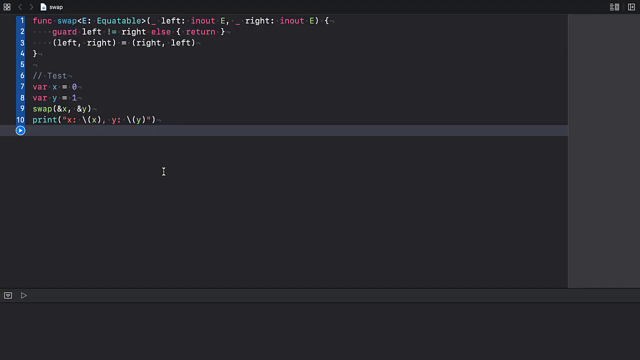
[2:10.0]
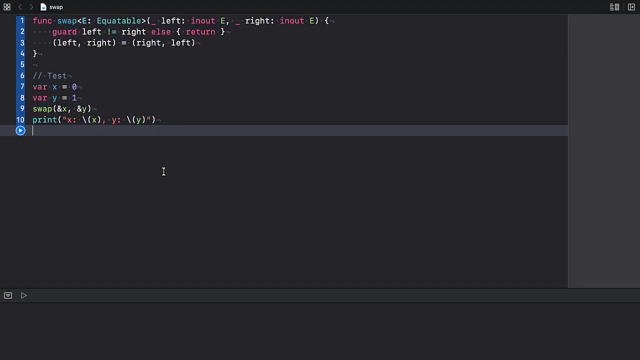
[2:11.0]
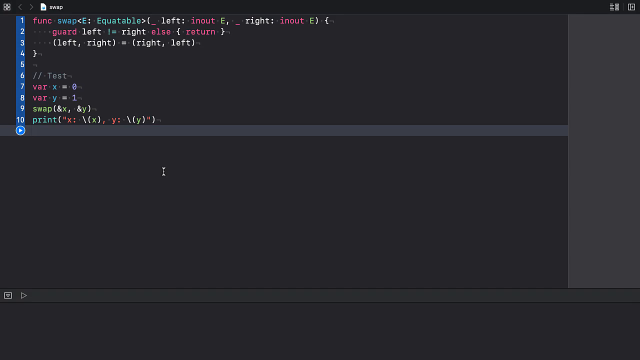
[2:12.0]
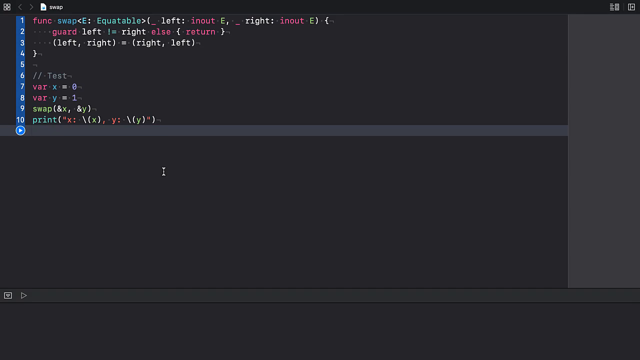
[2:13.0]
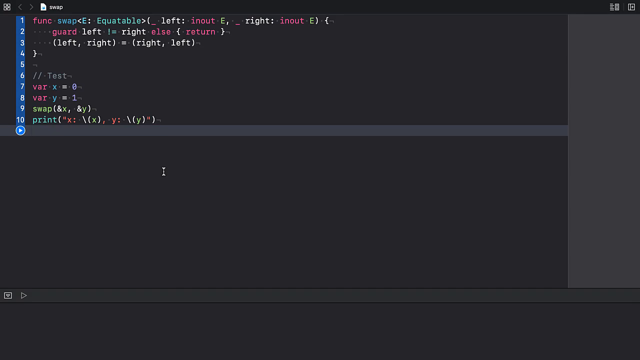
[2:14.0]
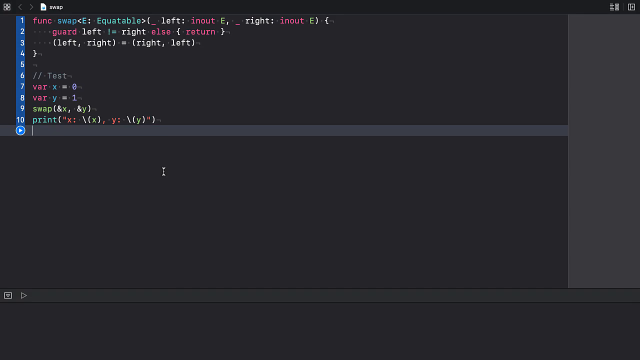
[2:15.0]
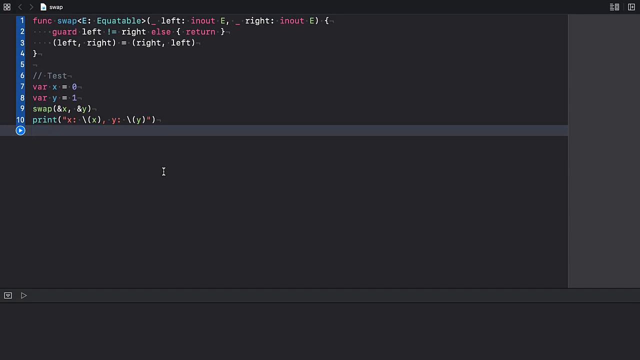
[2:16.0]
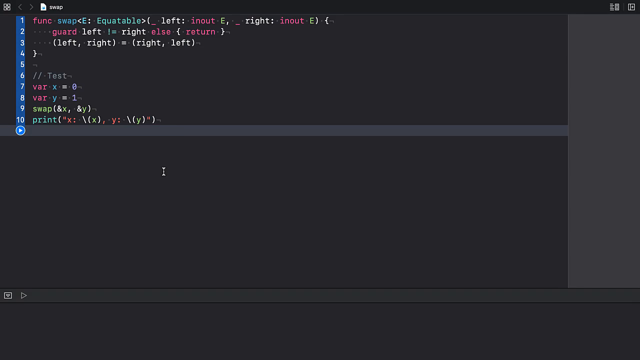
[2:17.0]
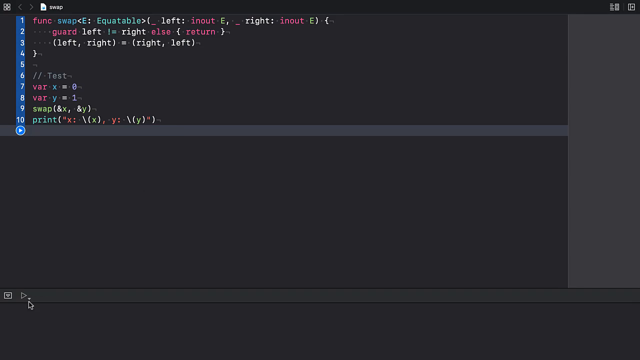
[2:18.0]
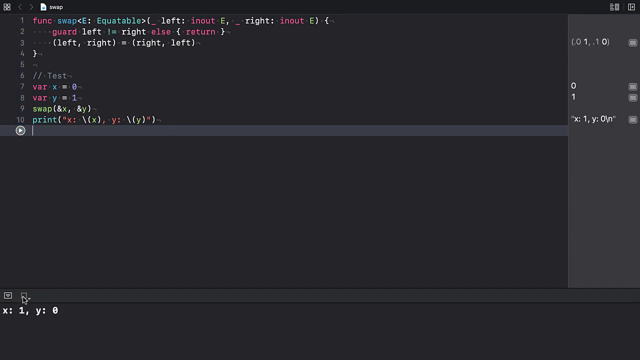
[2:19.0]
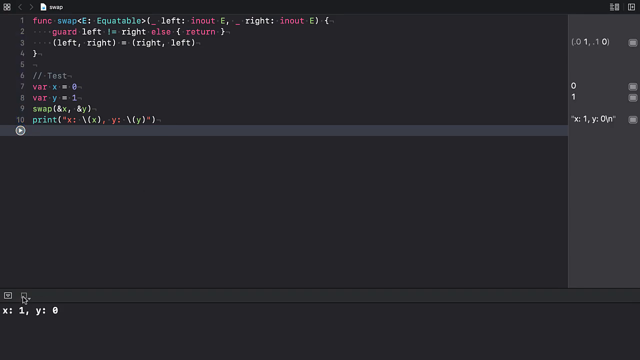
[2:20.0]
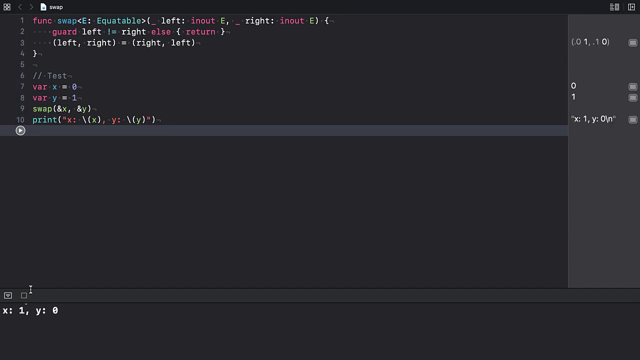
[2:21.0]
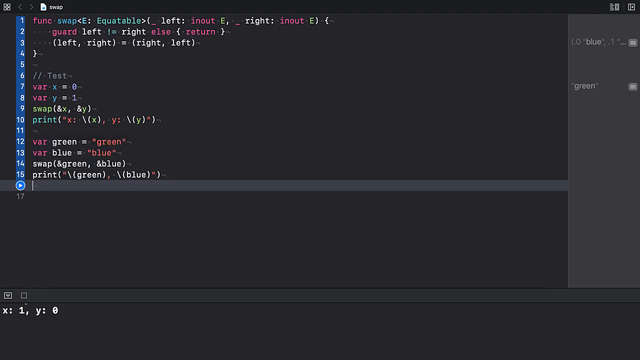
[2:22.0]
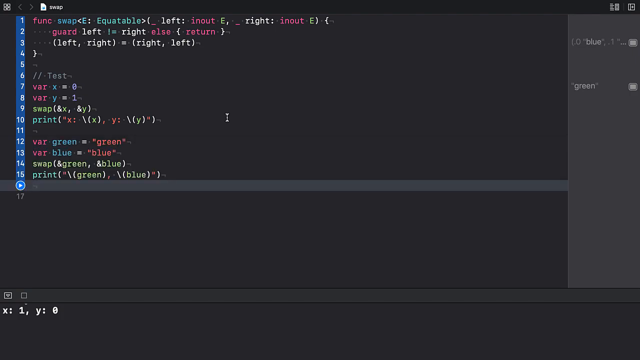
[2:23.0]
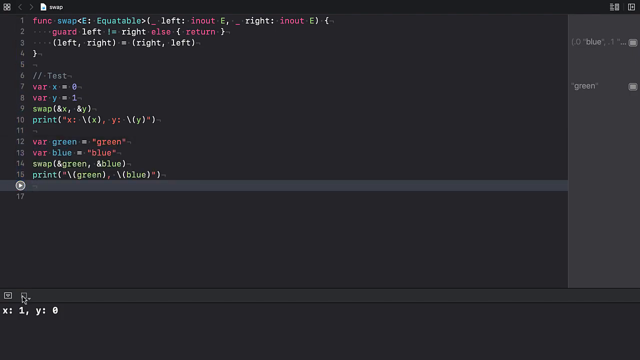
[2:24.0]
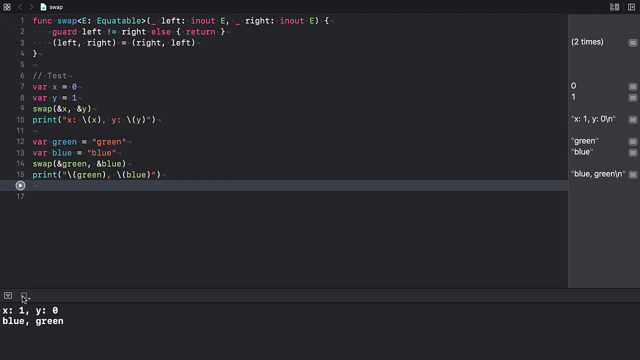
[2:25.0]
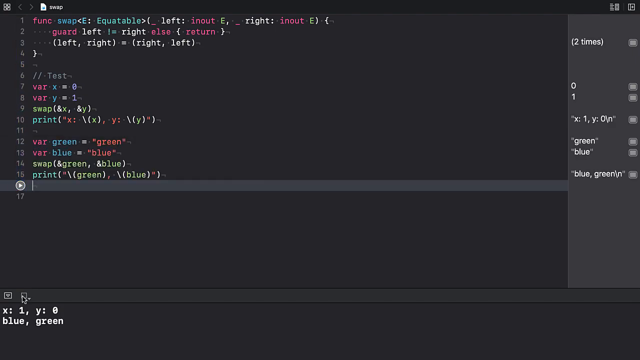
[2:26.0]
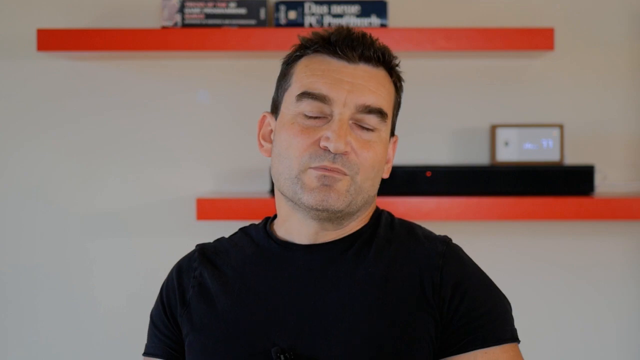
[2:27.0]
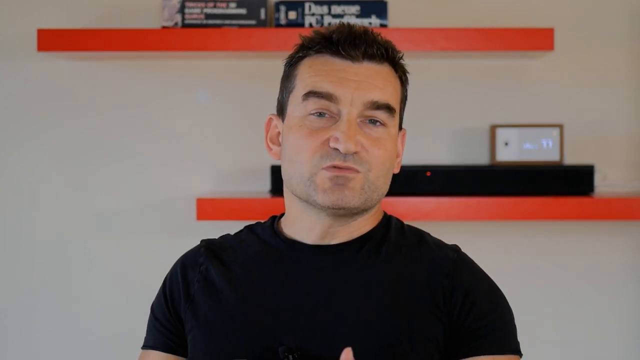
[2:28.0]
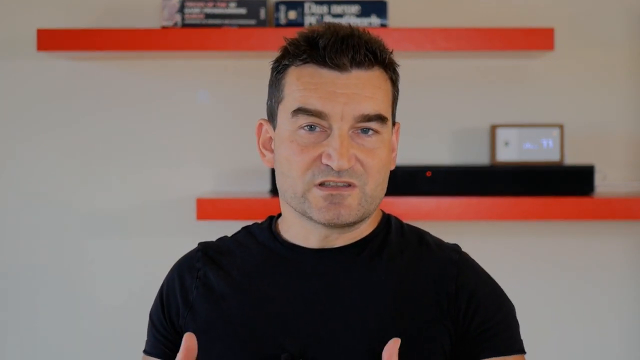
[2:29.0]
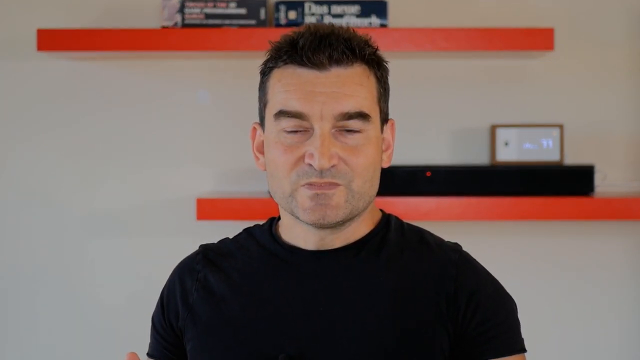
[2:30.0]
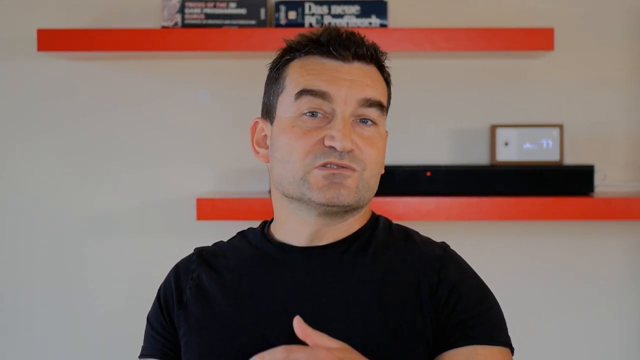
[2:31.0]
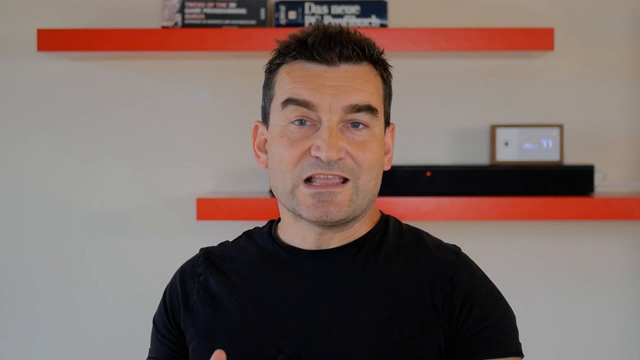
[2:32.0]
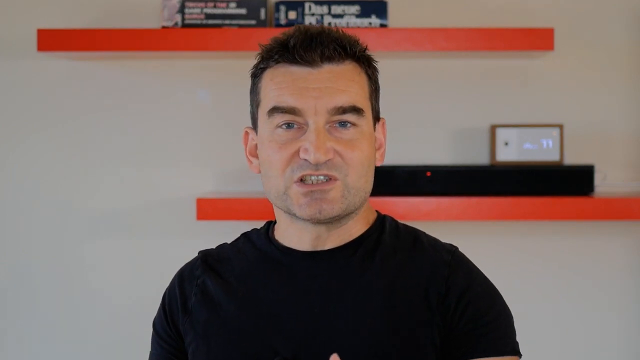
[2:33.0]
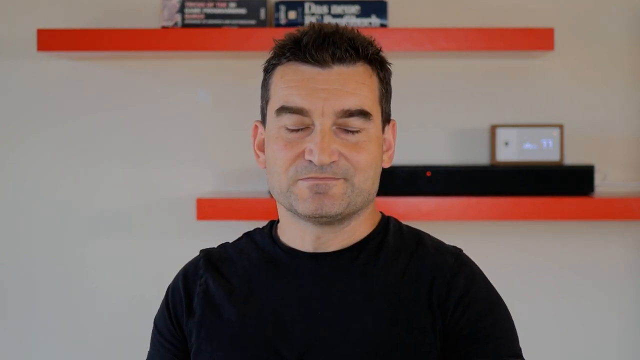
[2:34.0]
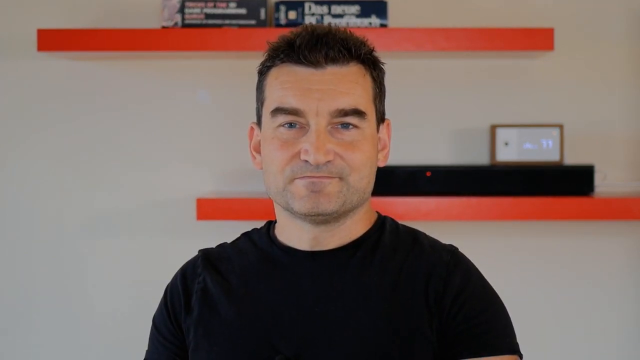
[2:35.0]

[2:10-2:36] A multicolored computer message appears in the upper left-hand corner. It has 10 lines, illuminated in blue. The blue goes away, and then there are 14 lines, illuminated. Something very similar appears in the upper corner on the right-hand side. A man appears and speaks continuously. He has black hair and bushy eyebrows and wears a black sweater, and he is standing in front of two shelves, one lower than the other. The lower one has a receiver and a smaller white box that looks like it shows the time or the date, with a number 11 visible. The upper shelf is orange as well and has two stacks of books.